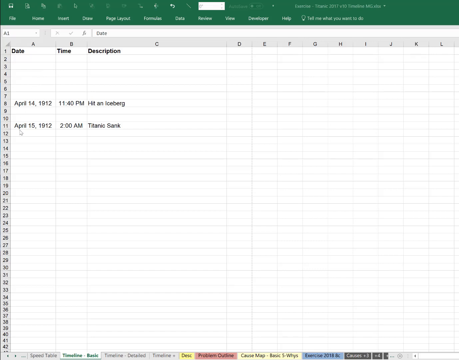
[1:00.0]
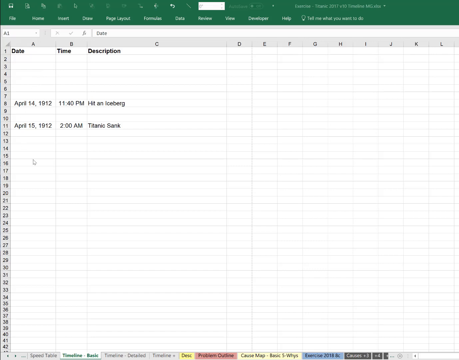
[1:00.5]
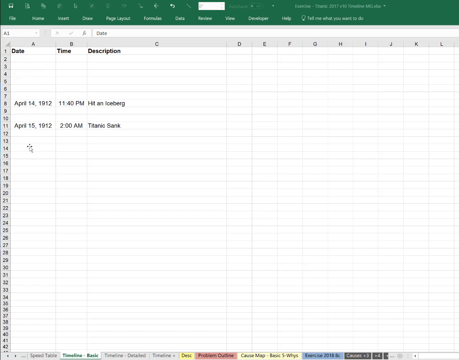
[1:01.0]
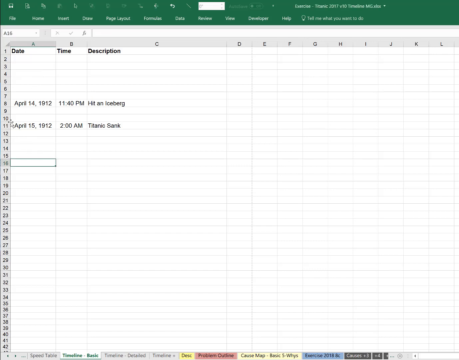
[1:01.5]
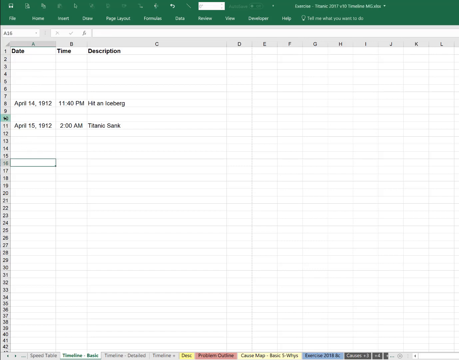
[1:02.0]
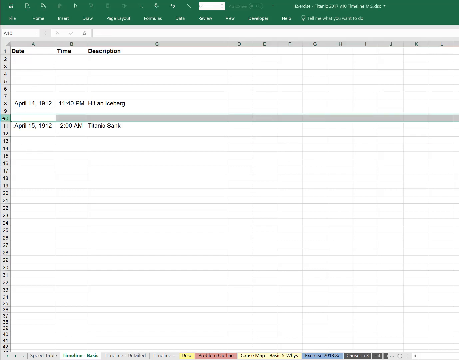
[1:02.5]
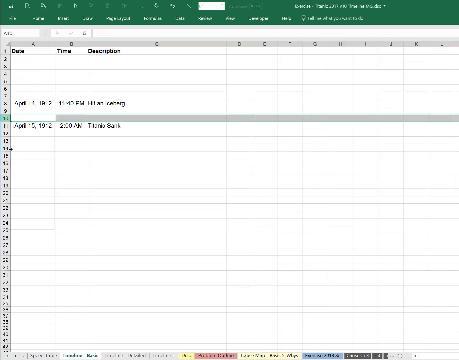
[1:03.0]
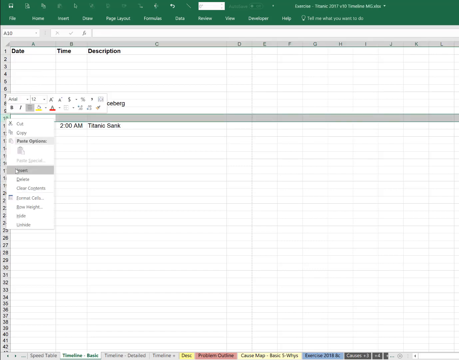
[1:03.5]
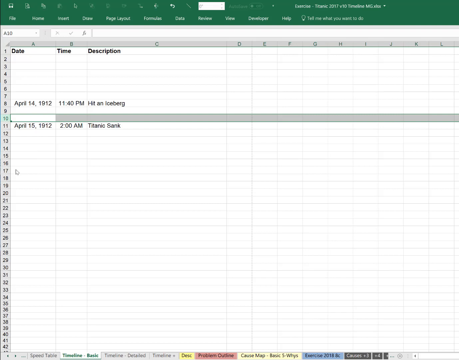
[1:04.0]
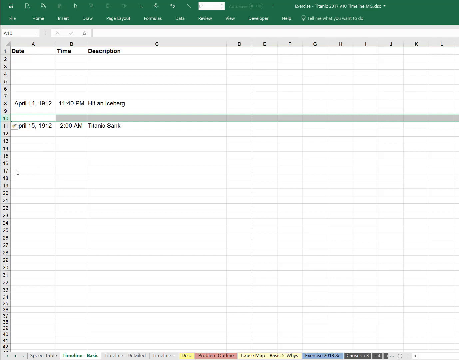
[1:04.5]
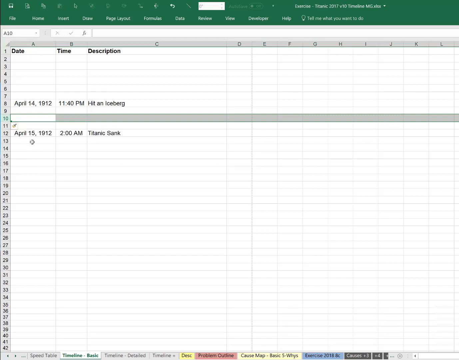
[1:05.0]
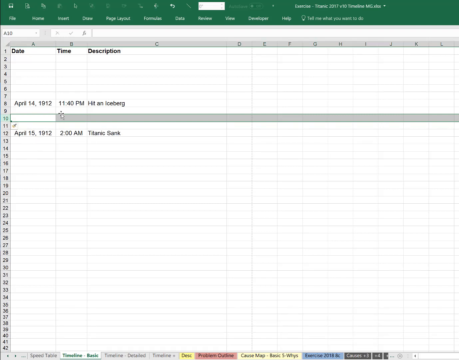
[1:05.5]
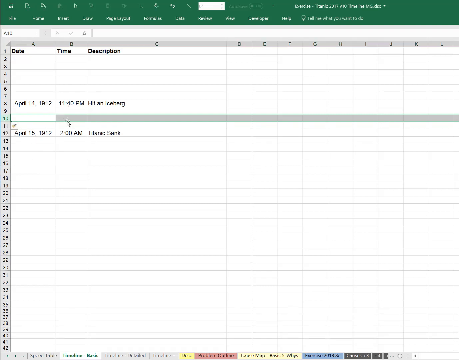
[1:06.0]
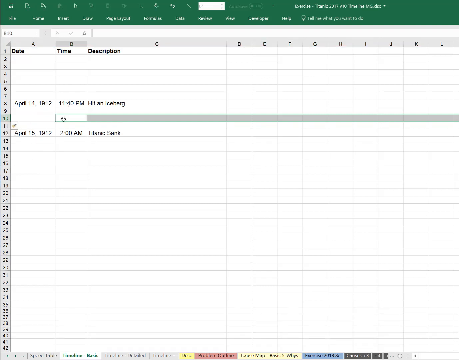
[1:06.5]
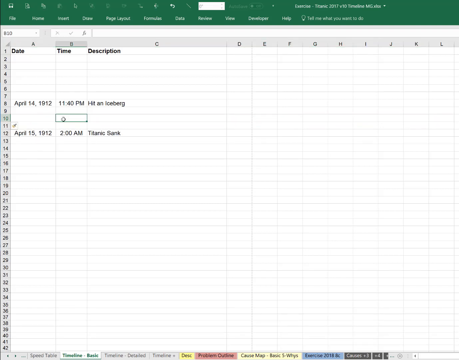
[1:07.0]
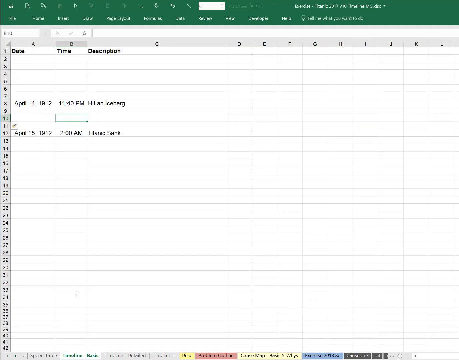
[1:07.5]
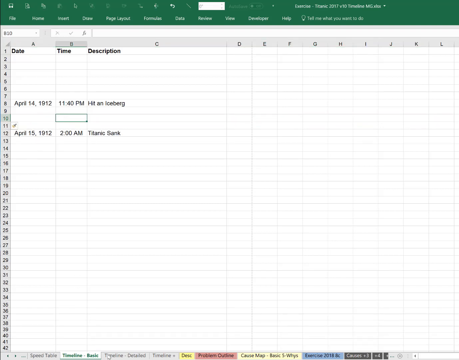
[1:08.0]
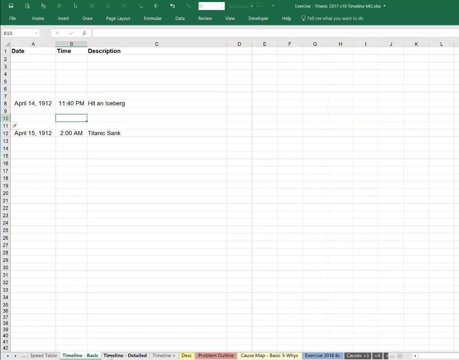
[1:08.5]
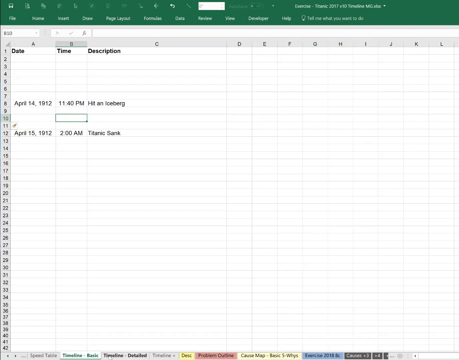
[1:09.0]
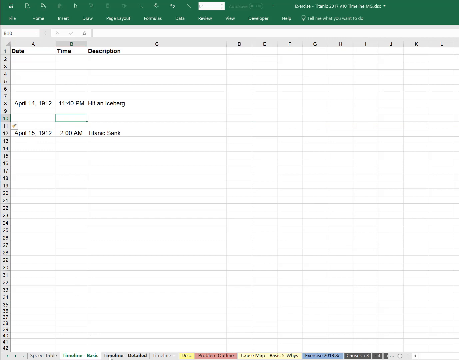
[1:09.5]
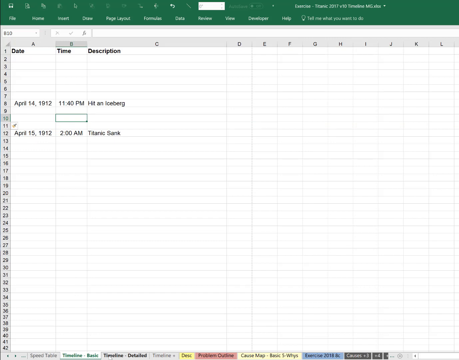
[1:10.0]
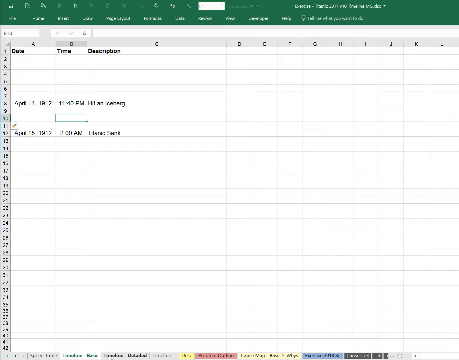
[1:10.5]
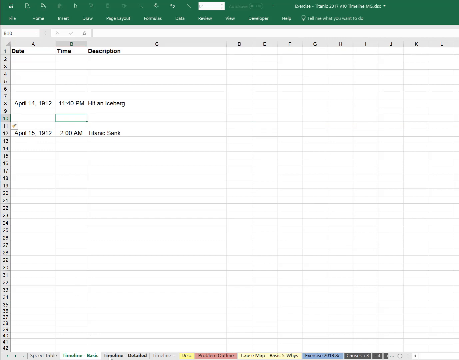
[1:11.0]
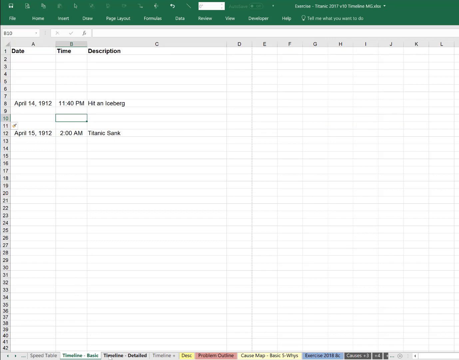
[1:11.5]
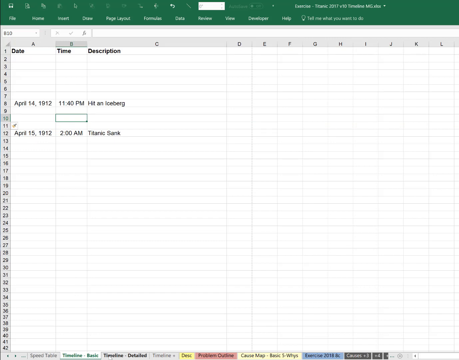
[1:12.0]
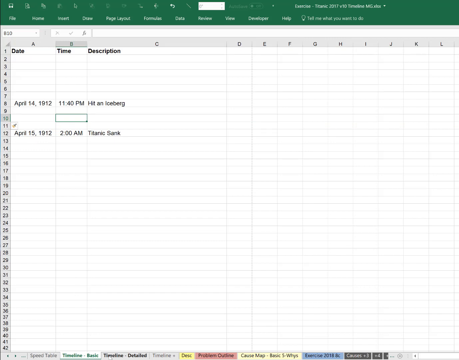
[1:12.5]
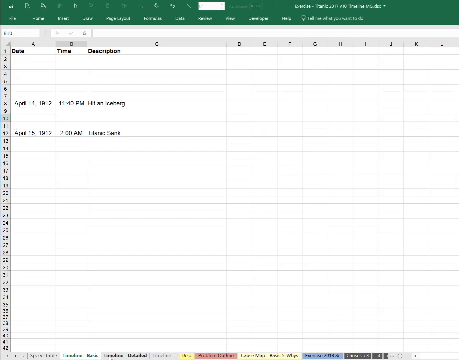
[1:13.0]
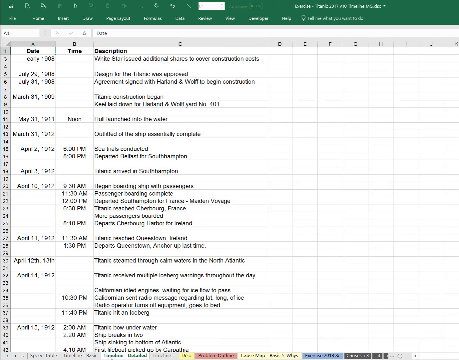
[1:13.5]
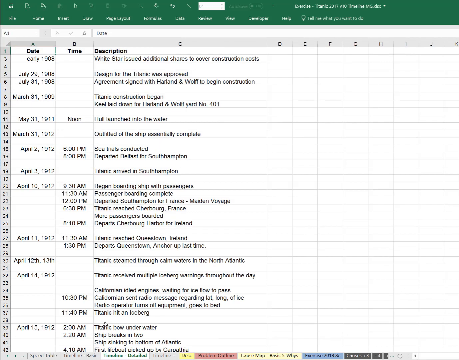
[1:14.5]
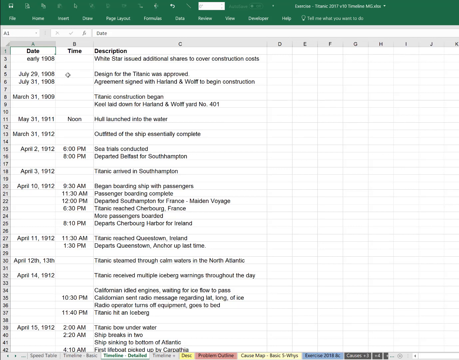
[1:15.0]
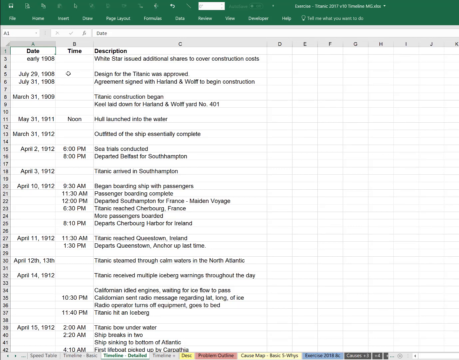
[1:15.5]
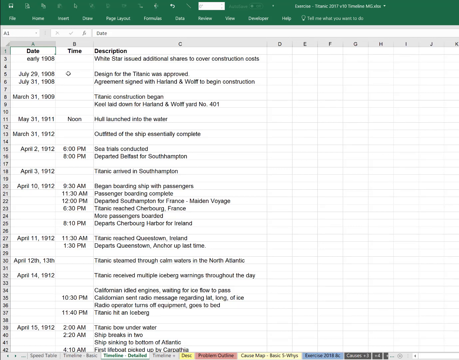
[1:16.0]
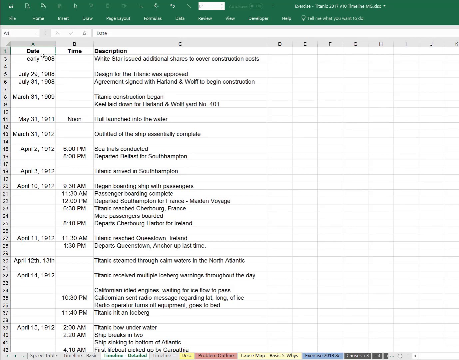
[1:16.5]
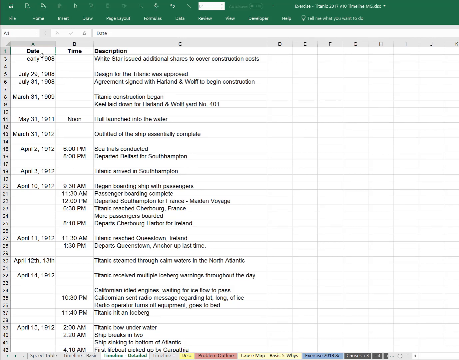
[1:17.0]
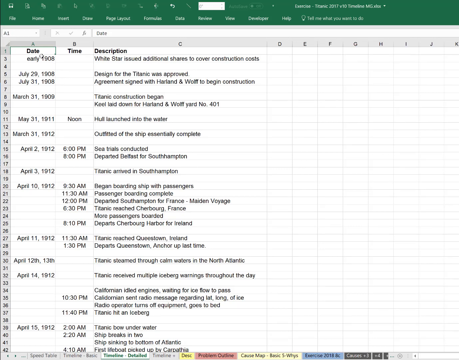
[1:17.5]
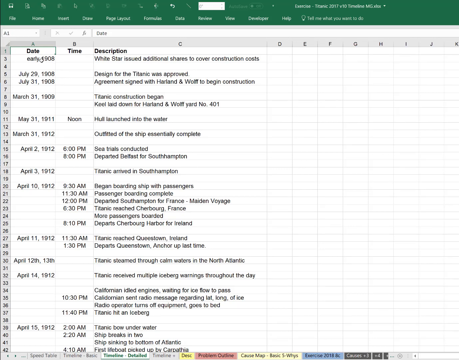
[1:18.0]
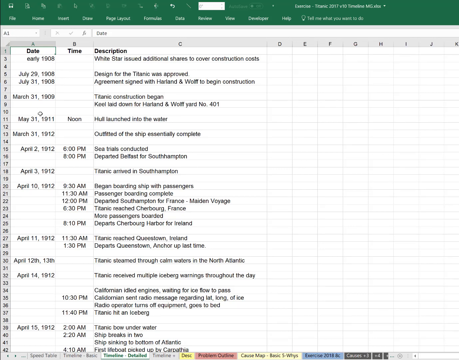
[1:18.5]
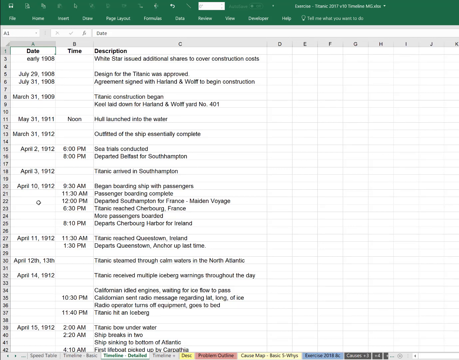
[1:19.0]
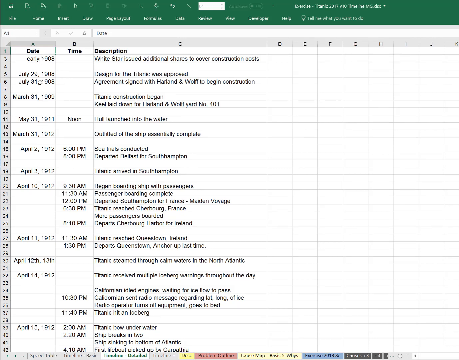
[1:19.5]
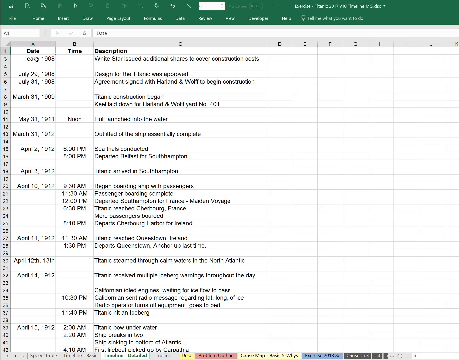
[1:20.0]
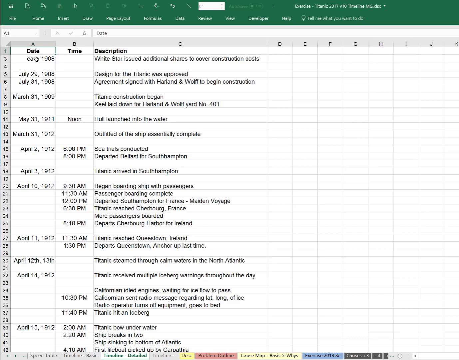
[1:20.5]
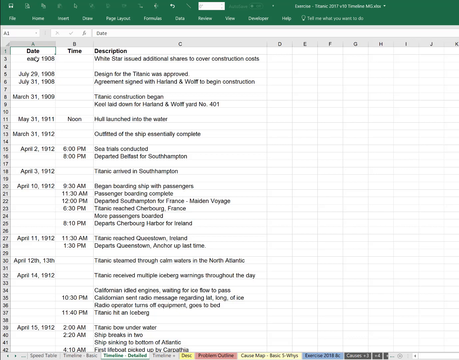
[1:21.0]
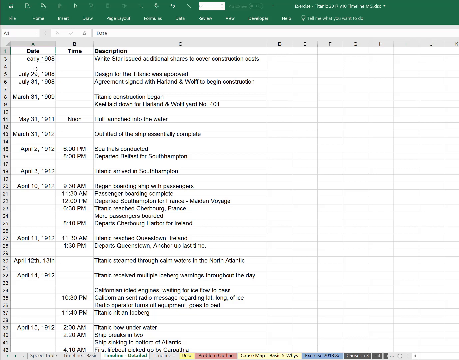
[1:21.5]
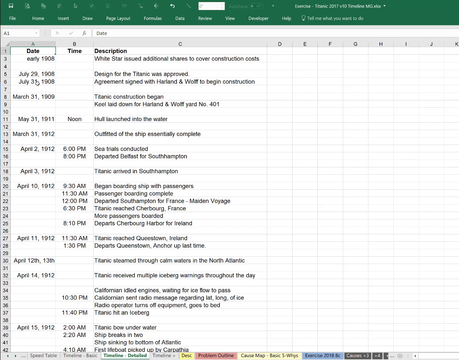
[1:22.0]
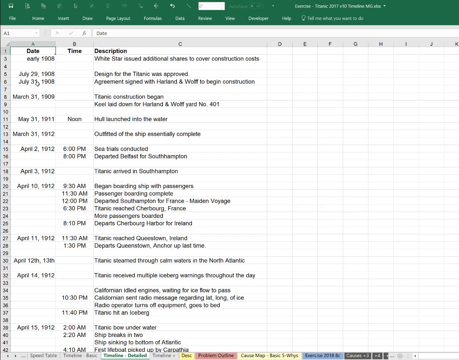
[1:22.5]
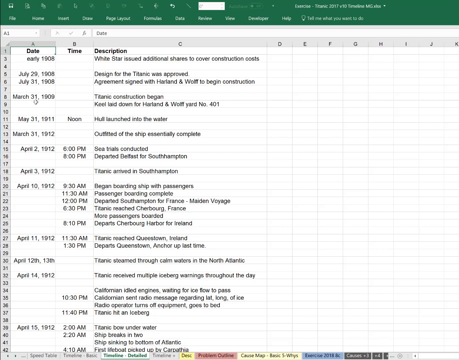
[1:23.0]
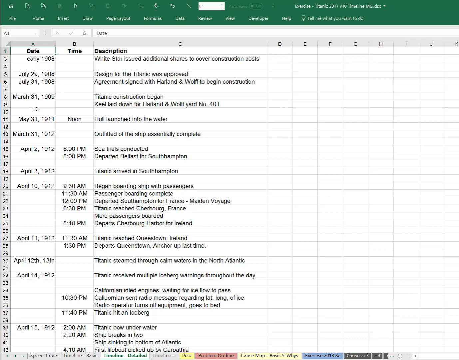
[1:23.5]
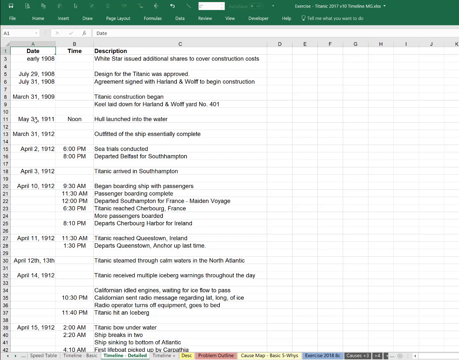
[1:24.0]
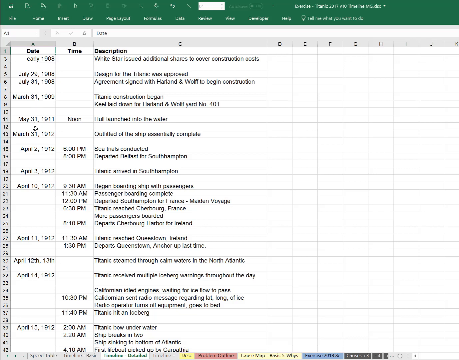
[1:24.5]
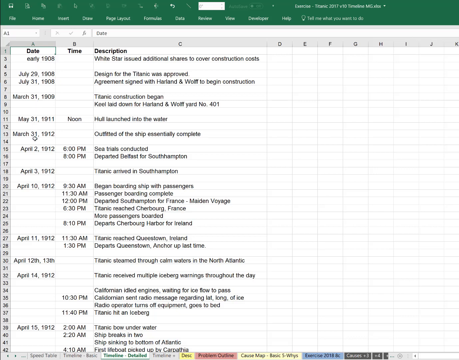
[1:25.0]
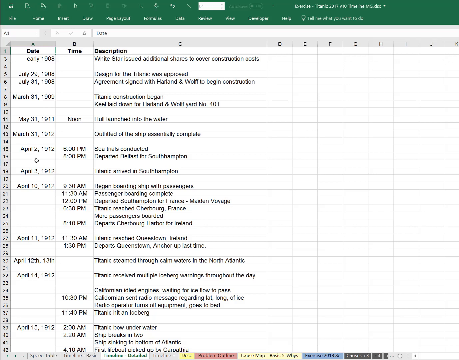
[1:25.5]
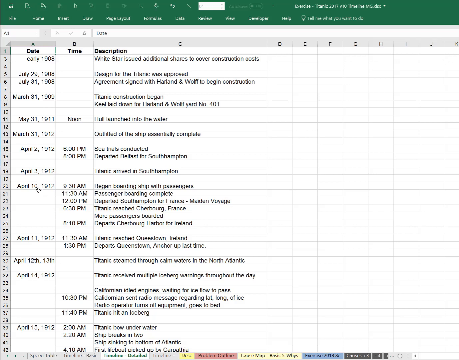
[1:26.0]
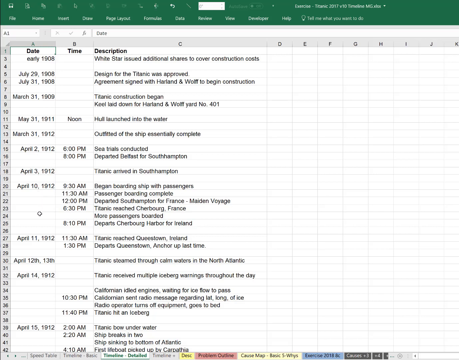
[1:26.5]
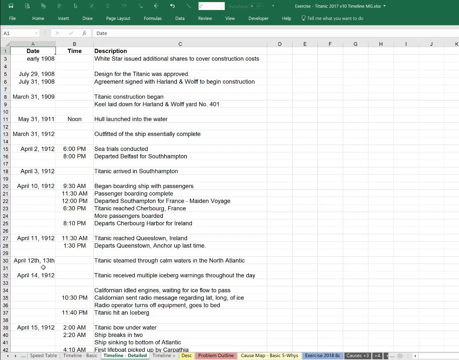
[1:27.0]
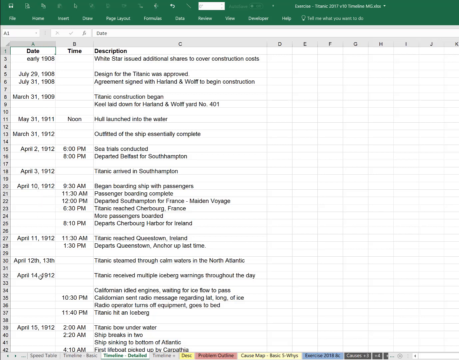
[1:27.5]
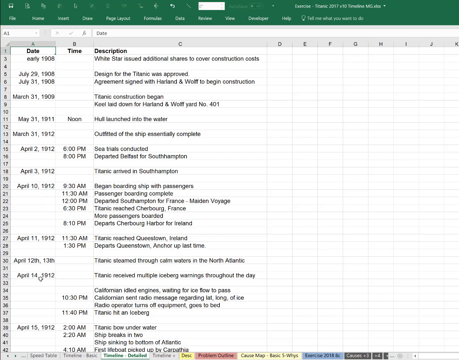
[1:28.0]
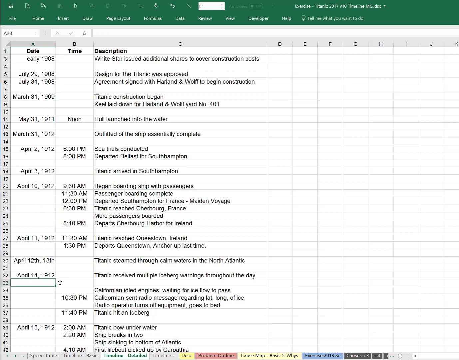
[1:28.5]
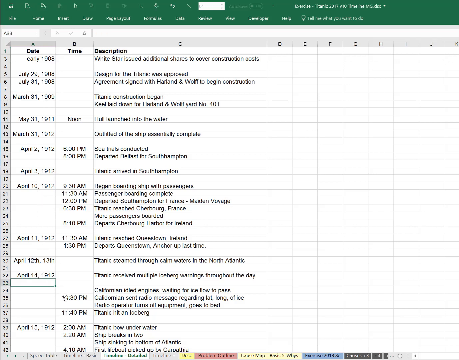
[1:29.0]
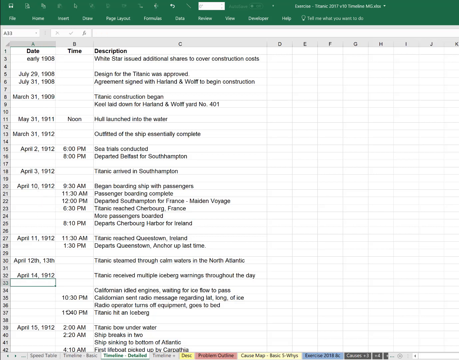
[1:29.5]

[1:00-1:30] The user highlights and clicks on row 10, which turns gray from column B all the way to column L, while column A stays white. Two pop-up windows appear: one offers options for customizing the font and lettering of the text, such as highlight, bold, and italicize, and the other has cut, copy, paste, and other options. The user clicks Insert, after which a little icon appears below row 10, on row 11. The user clicks on B10. The user then loads something in which the whole sheet is populated with text showing different dates, times, and descriptions. The user goes to date, hesitates, and appears to be choosing a date, moving down A, which holds all the dates. Row 2 reads early 1908, with no time, and the description "White Star issued additional shares to cover construction costs." There are about 40 rows in total, most of them populated. Toward the end, the user clicks on the time 11 40 p.m.